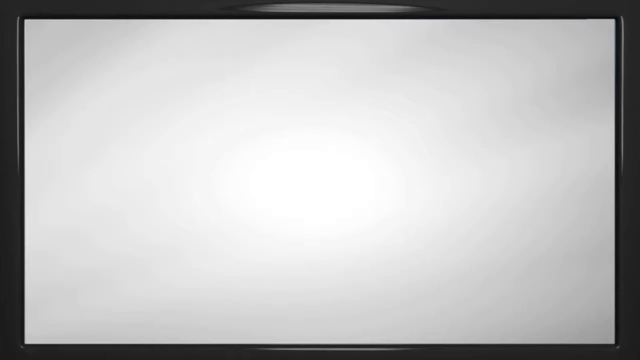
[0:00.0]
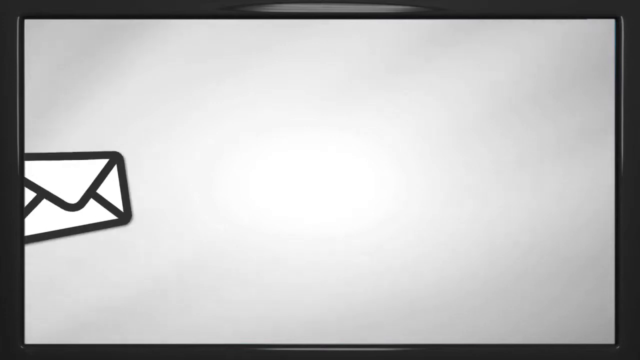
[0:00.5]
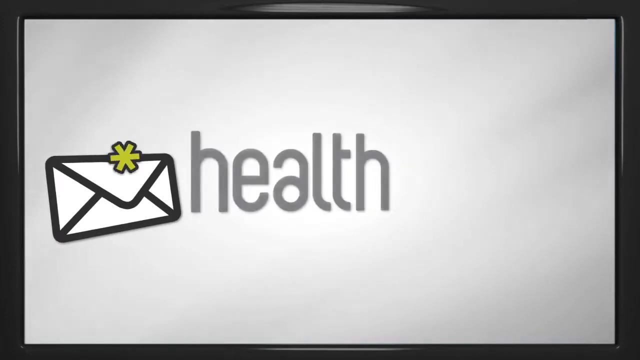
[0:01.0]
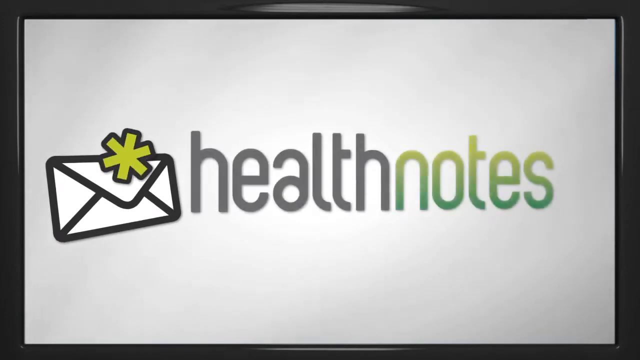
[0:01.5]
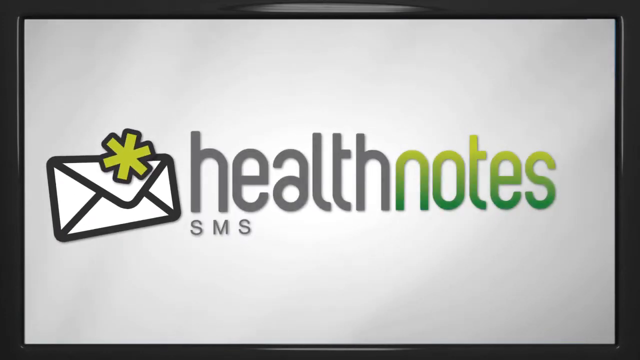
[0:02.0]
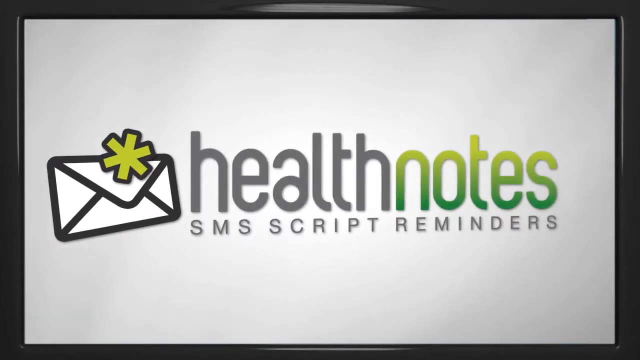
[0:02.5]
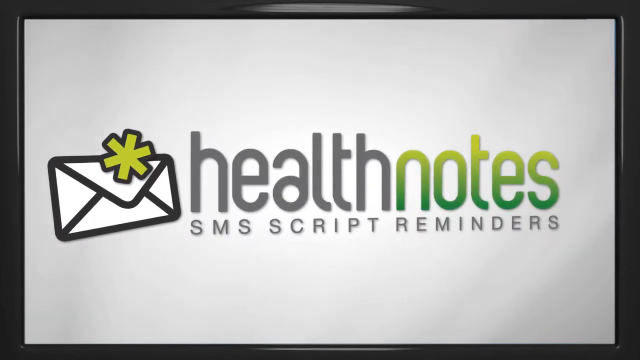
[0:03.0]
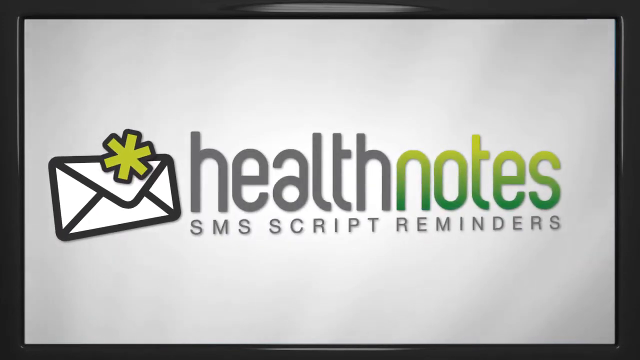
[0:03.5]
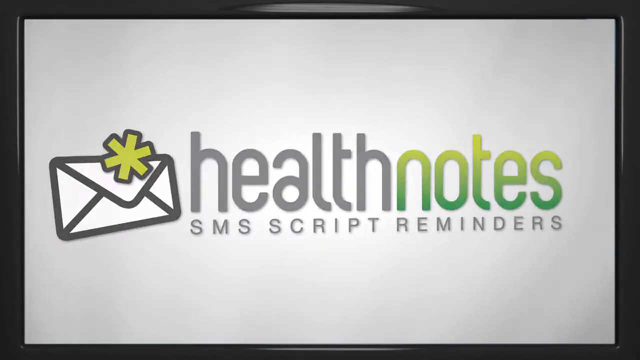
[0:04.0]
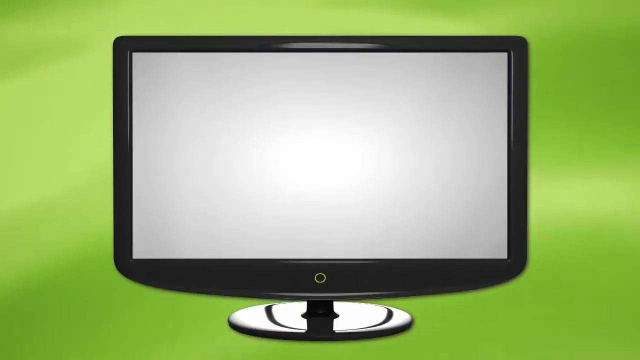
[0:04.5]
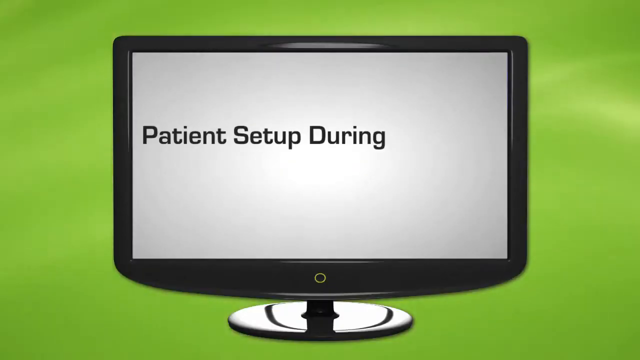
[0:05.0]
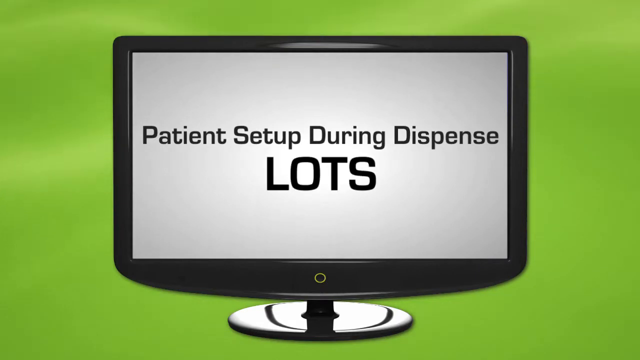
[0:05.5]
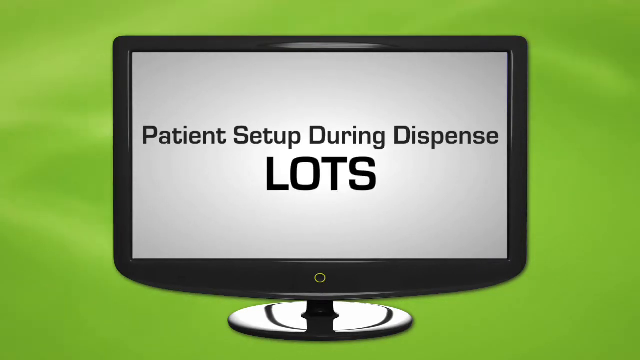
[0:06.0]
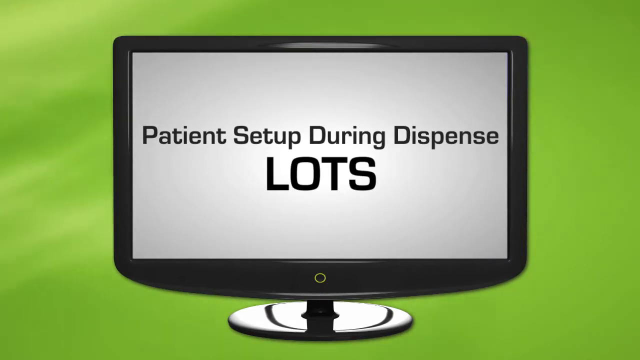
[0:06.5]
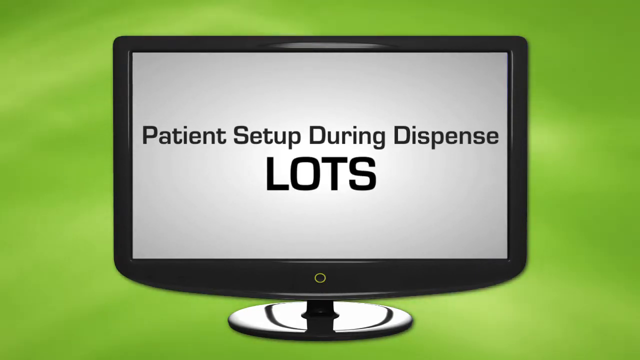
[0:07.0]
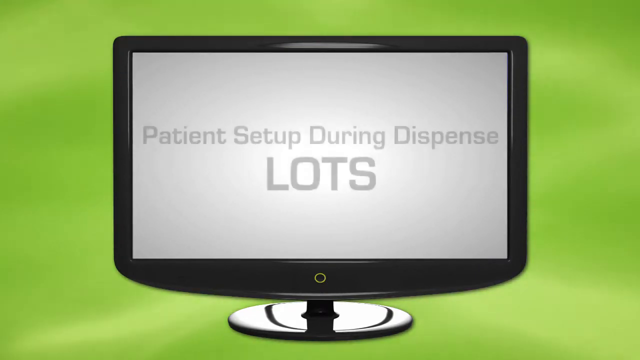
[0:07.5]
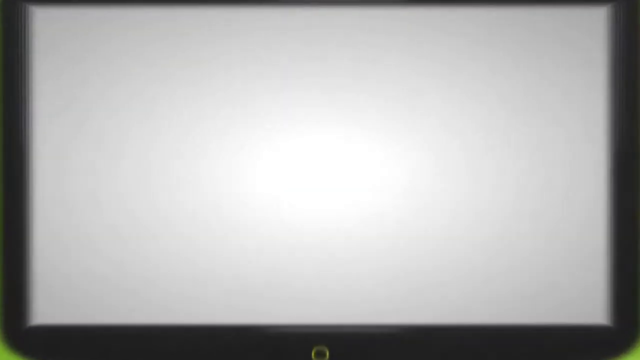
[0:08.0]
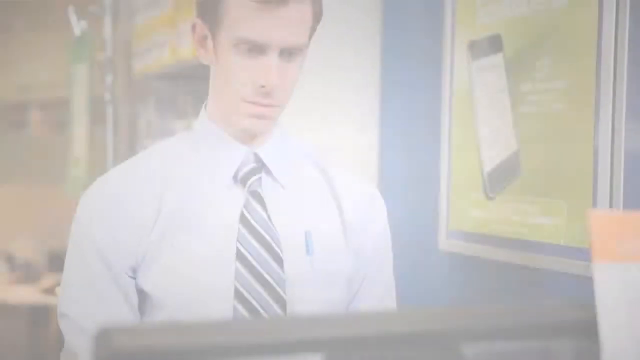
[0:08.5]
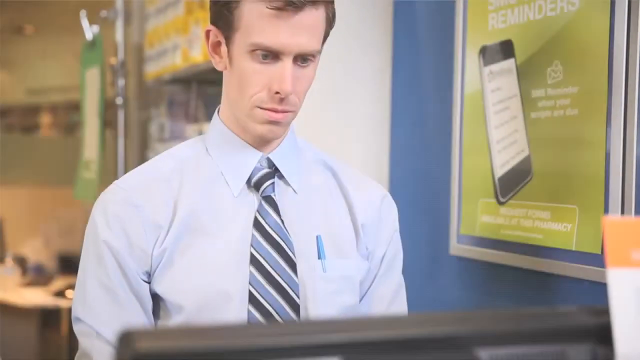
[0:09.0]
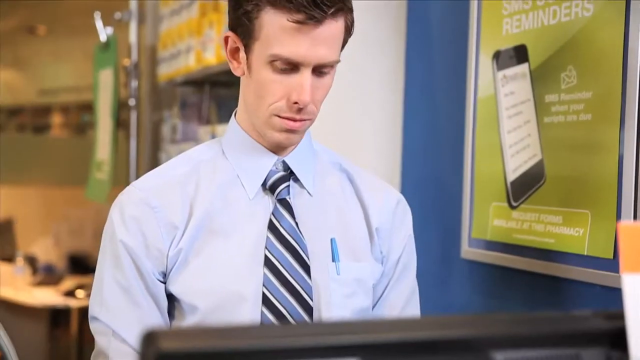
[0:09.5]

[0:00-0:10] An icon of an envelope with a small light green star appears, followed by the words "HealthNotes, SMS Script Reminders." Next comes what looks like a computer screen with the text "patient setup during dispense lots" on the front. The scene then changes to what looks like a man standing in some type of store. He appears to be a white man in his late 20s or early 30s, dressed formally in a blue button-down shirt and tie. Next to him is what seems to be a poster on the wall that says "SMS script reminders," with an image of a phone showing an app.